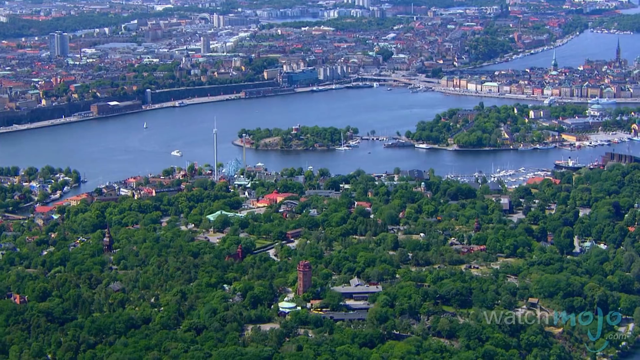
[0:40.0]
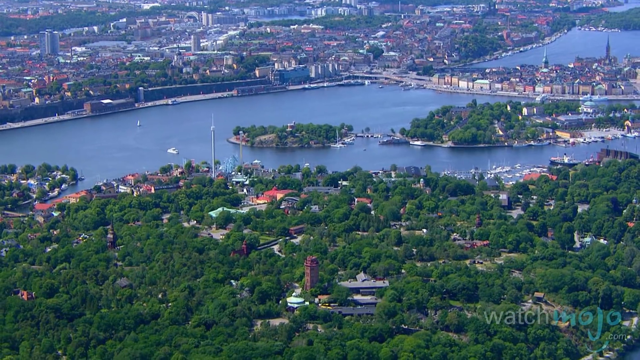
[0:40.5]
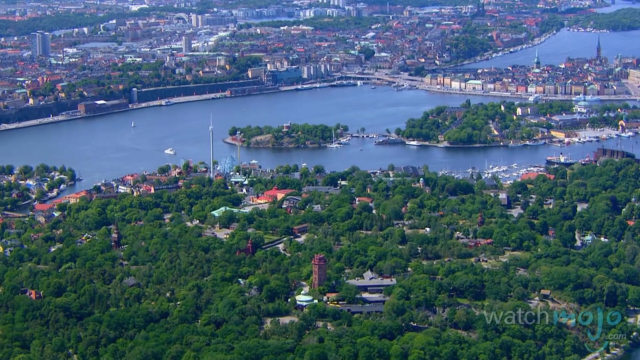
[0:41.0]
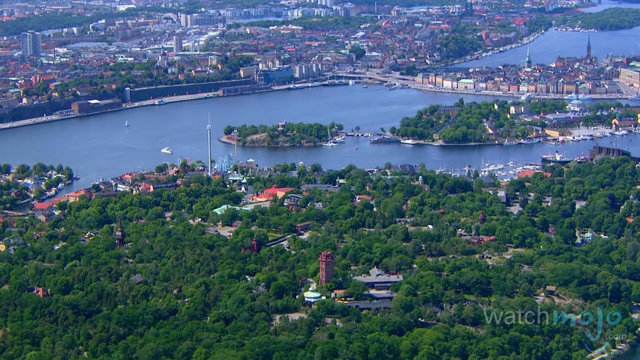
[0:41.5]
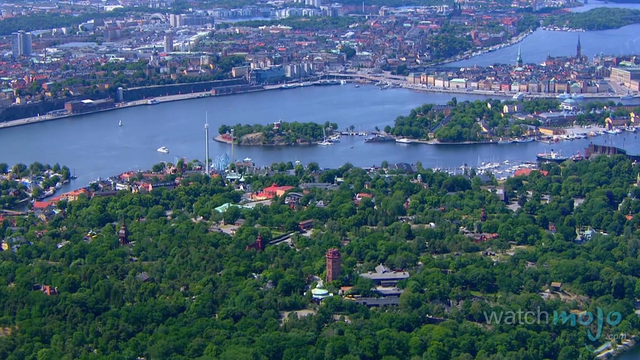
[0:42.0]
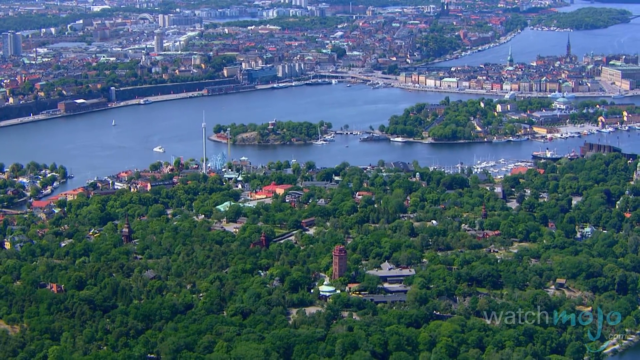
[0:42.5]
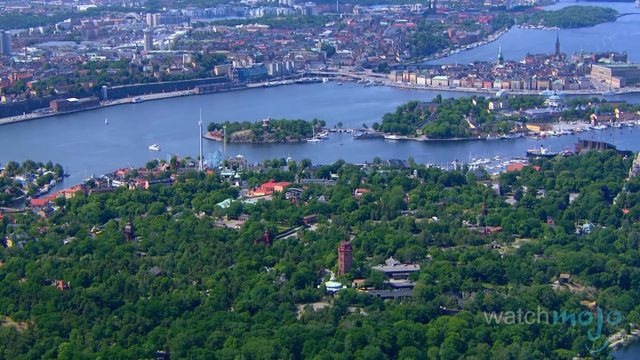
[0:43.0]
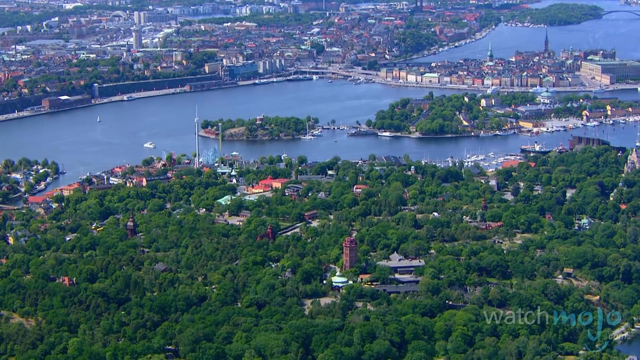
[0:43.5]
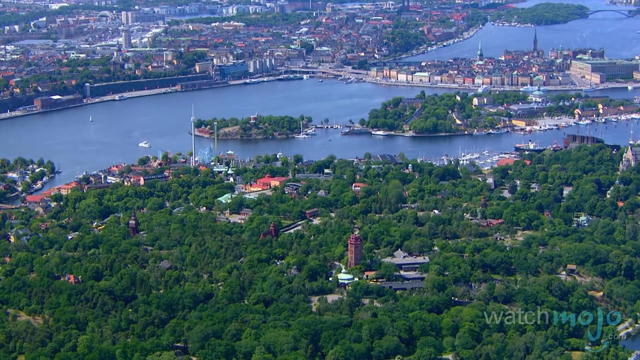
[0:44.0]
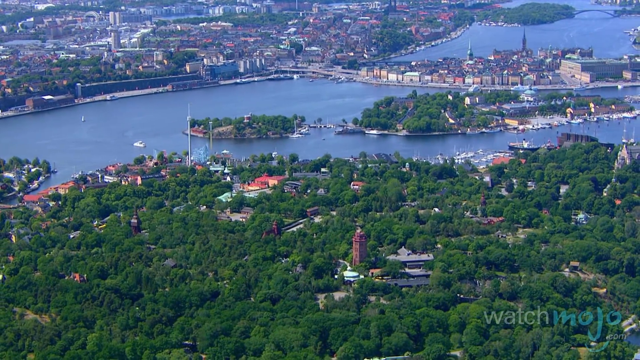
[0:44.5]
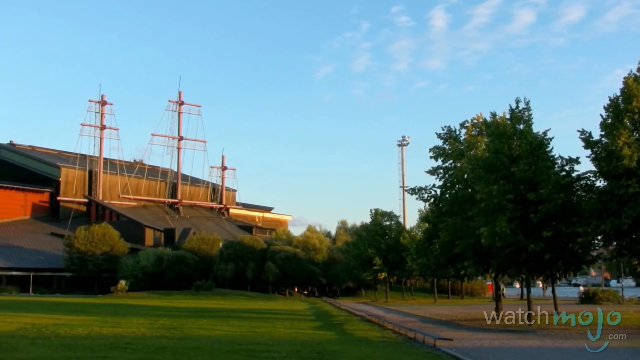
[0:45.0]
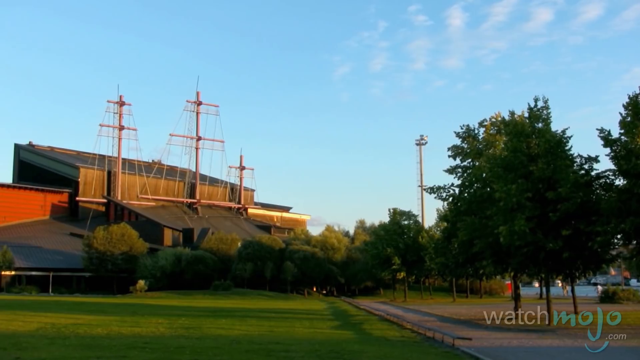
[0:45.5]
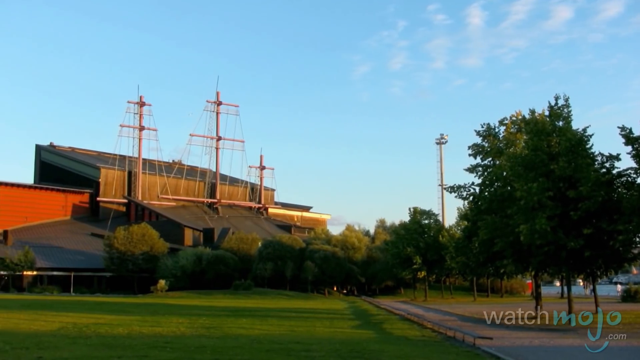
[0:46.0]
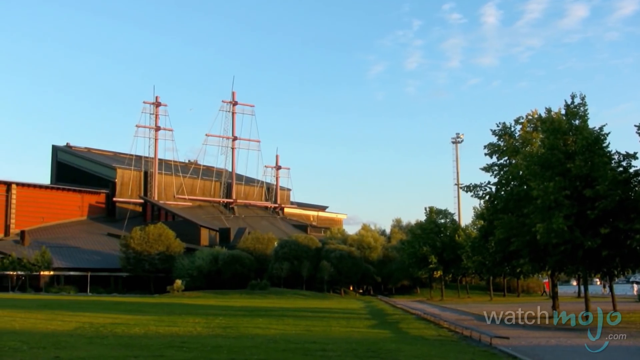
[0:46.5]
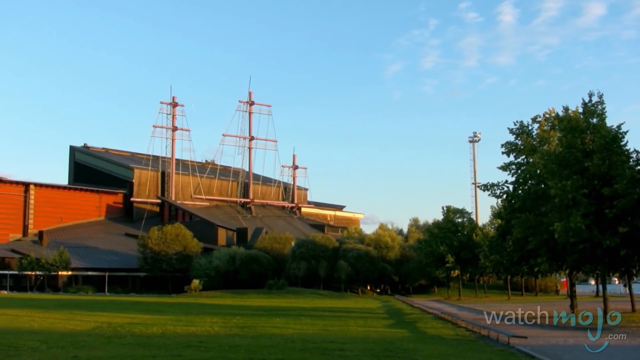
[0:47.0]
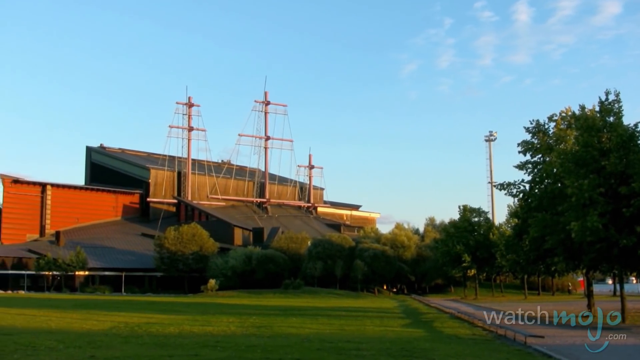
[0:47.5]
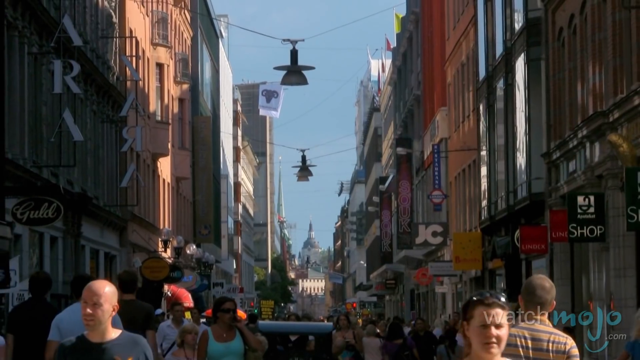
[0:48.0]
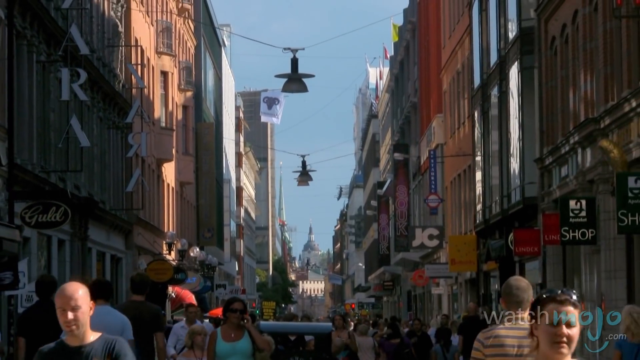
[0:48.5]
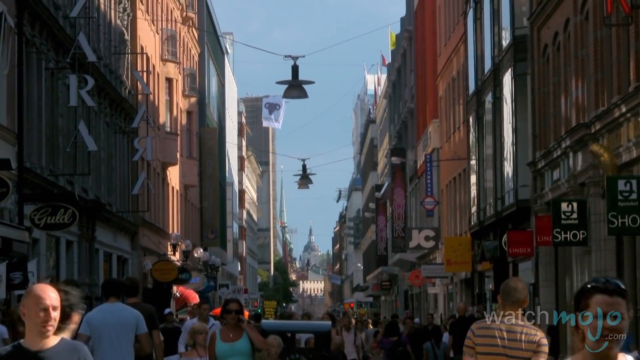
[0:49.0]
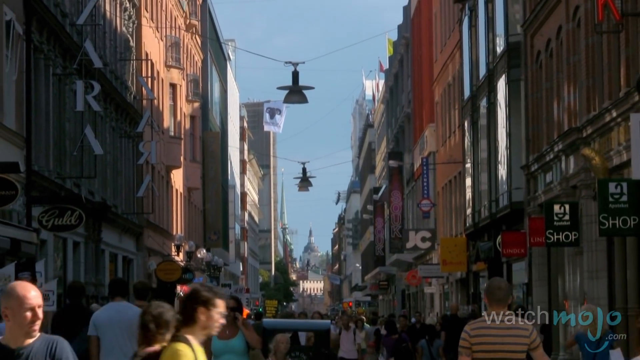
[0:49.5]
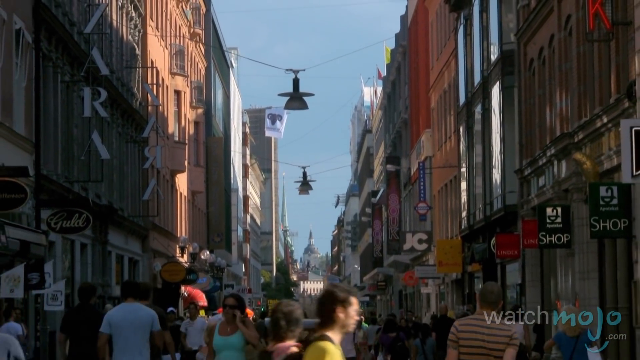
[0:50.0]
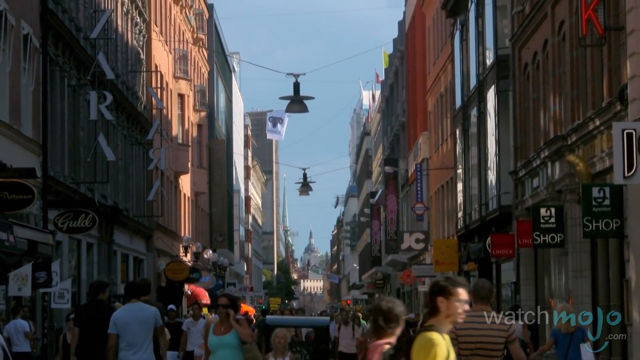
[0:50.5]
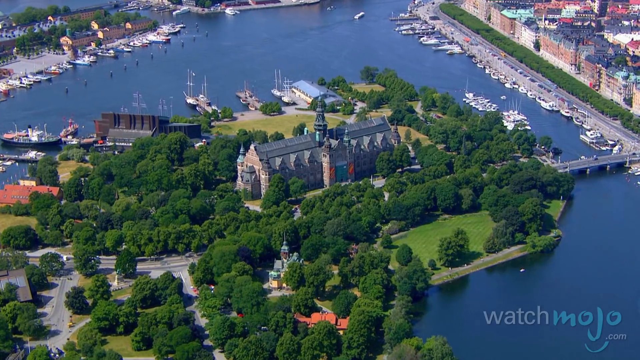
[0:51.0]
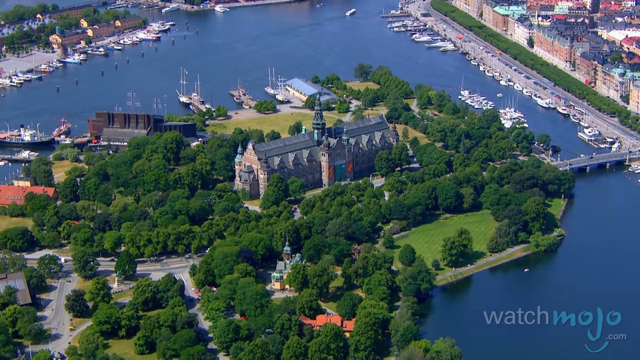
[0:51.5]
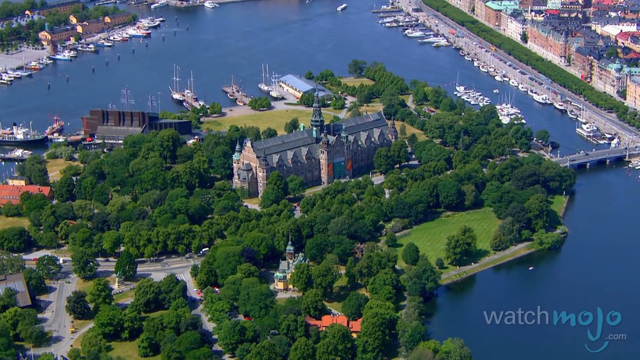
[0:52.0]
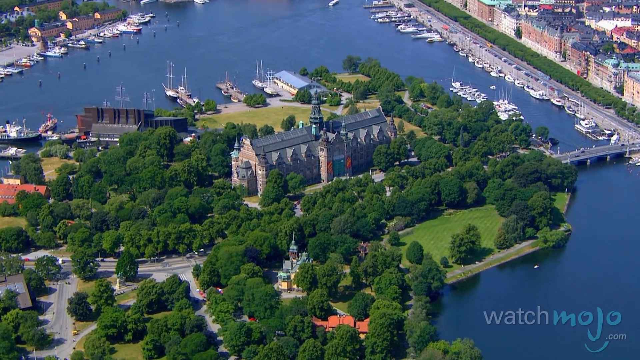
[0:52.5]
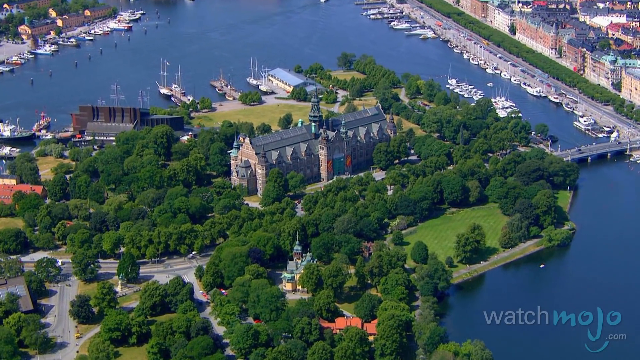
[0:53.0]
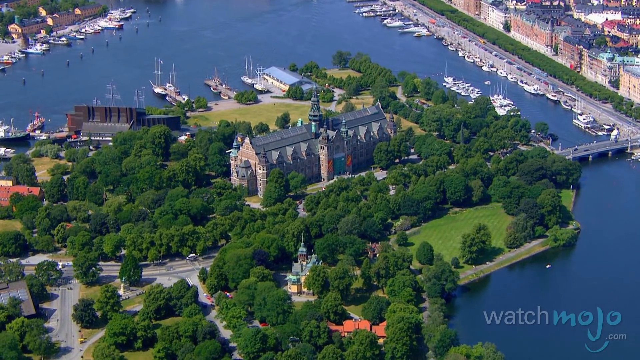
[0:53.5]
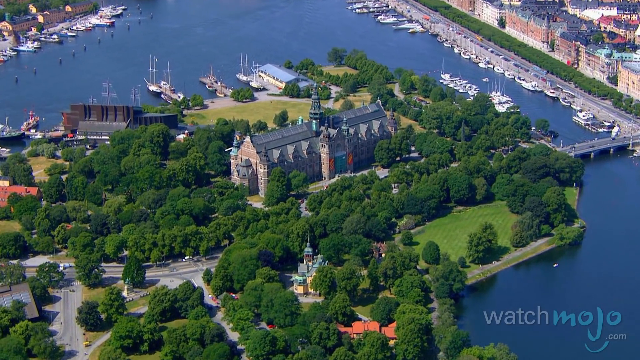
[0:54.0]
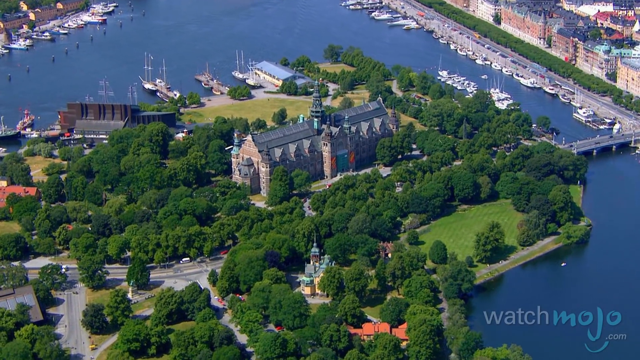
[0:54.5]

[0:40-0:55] A closer image shows the trees, the island and the peninsula over the water from more of an angle. It then shows a church that looks historical, with a steeple and greenery around it, maybe 50 yards or so from the water, where boats are docked for sailing. A number of trees surround the building, and there are roadways with cars driving. Next comes a shopping district that looks like an original city center, with retail stores along a narrow street. People walk up and down and cross back and forth; it looks pedestrian-only with no vehicles, and retail signs are visible on the side of the building. There is also a structure that is hard to make out from the camera's angle, possibly the back of a stage in an amphitheater-type setting, with some umbrellas or canopies shading the area beneath it.